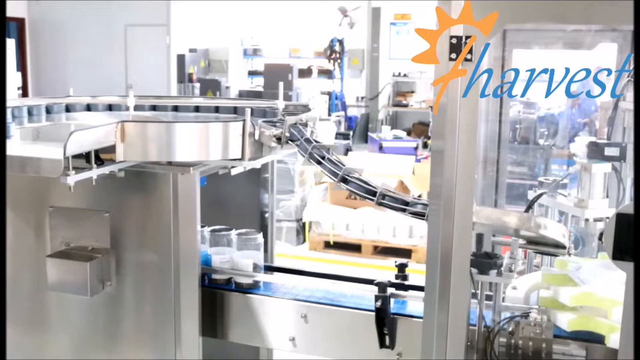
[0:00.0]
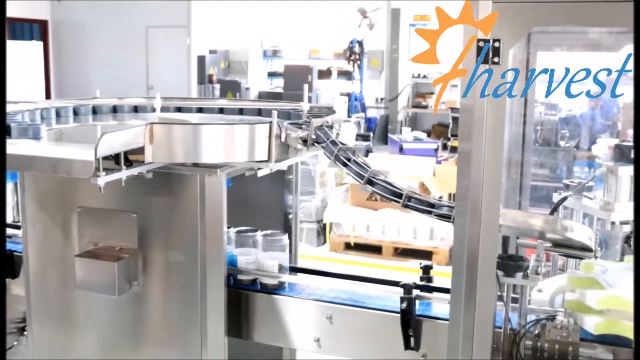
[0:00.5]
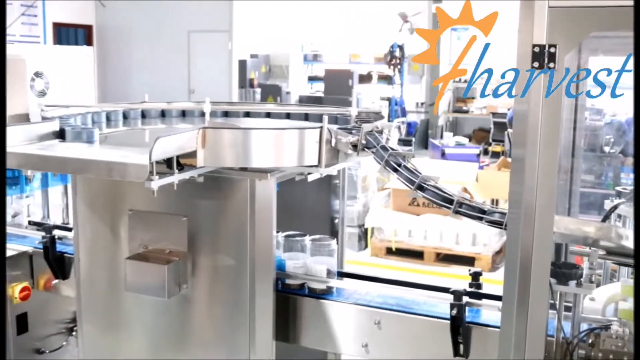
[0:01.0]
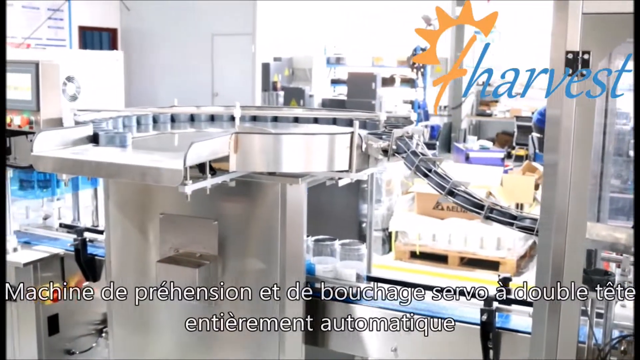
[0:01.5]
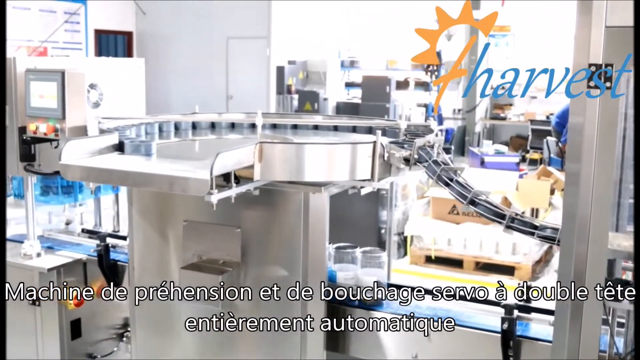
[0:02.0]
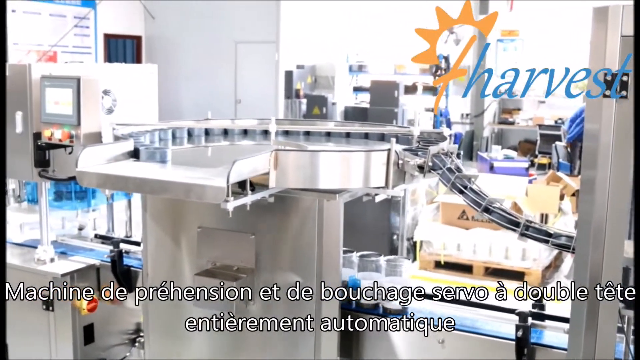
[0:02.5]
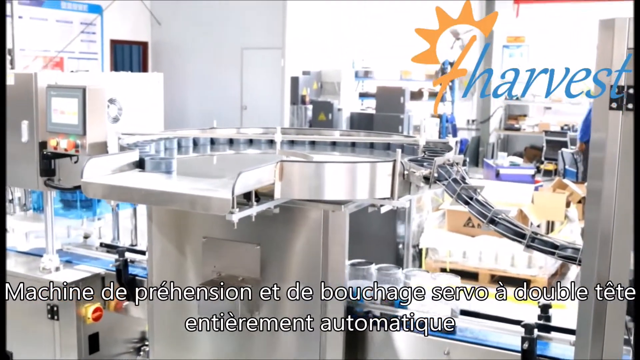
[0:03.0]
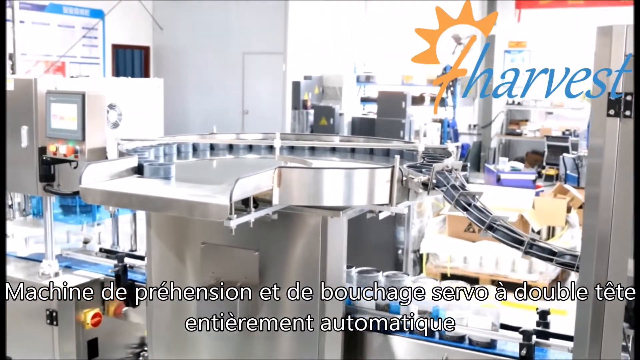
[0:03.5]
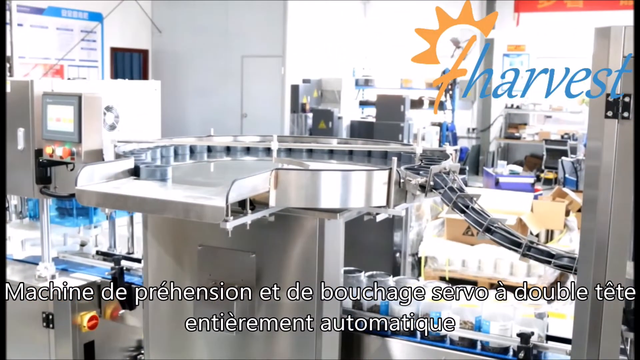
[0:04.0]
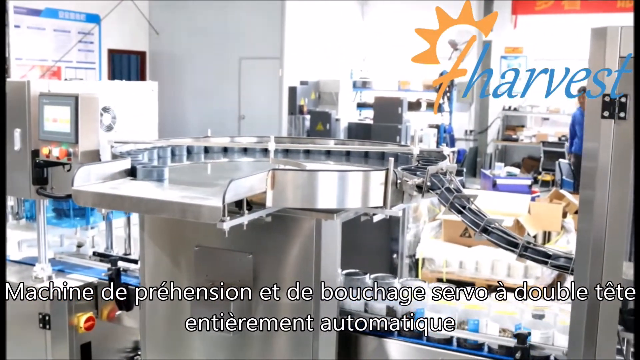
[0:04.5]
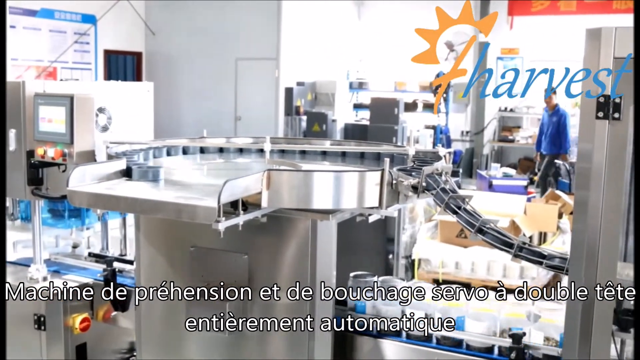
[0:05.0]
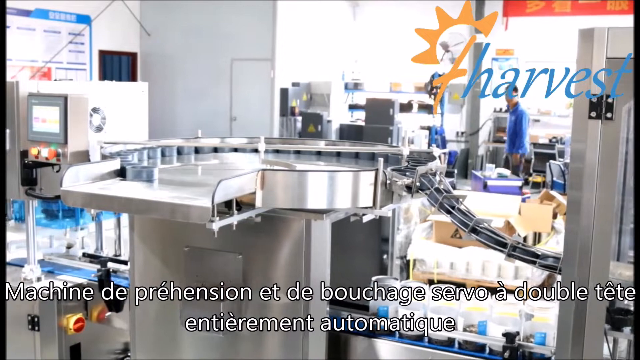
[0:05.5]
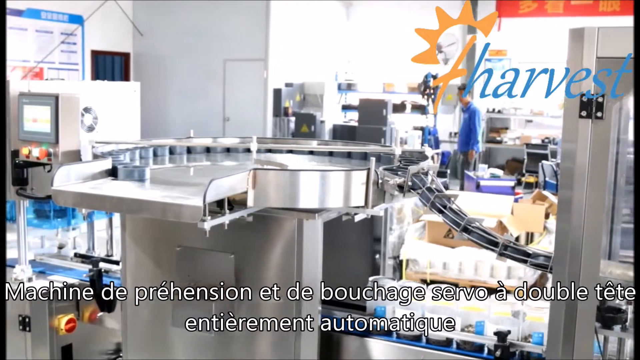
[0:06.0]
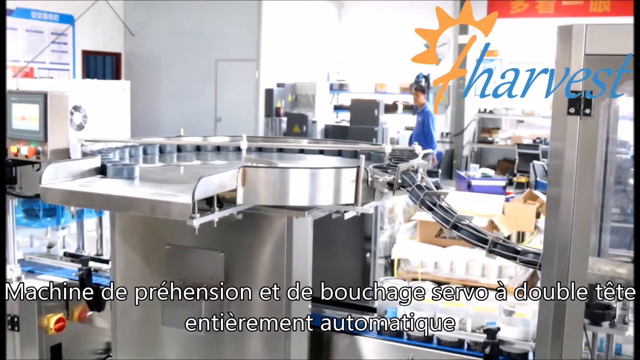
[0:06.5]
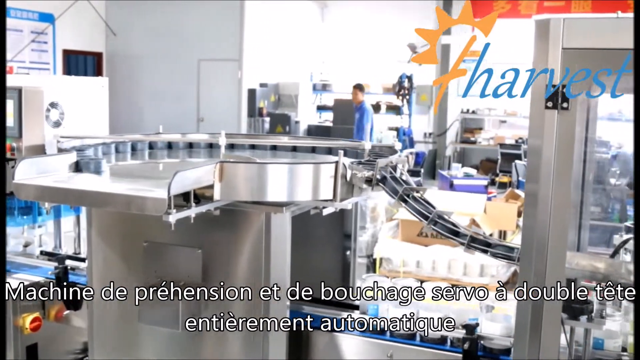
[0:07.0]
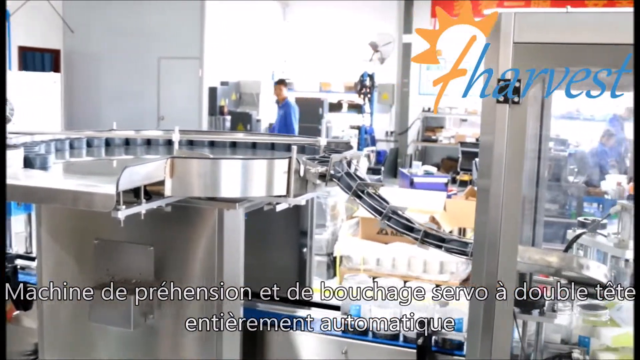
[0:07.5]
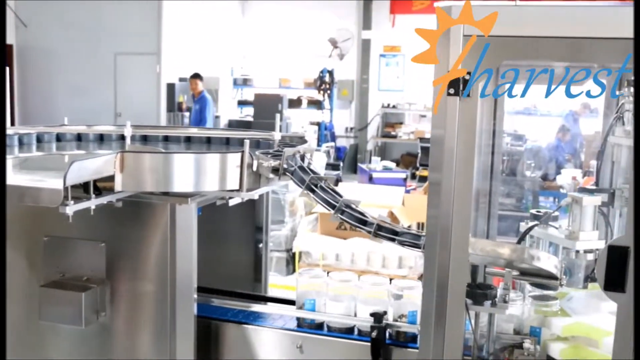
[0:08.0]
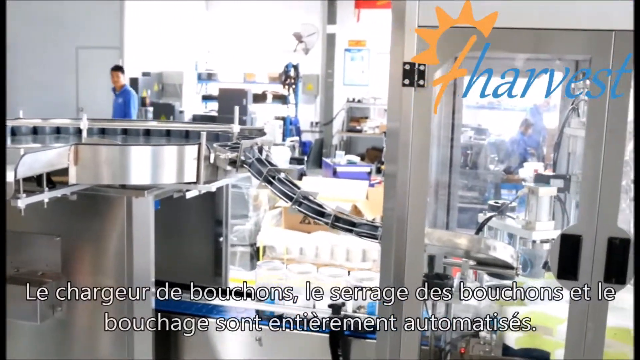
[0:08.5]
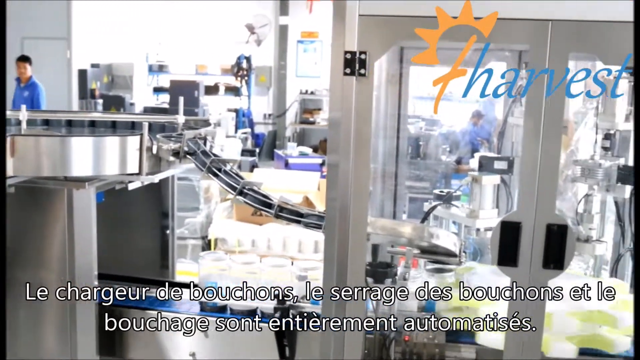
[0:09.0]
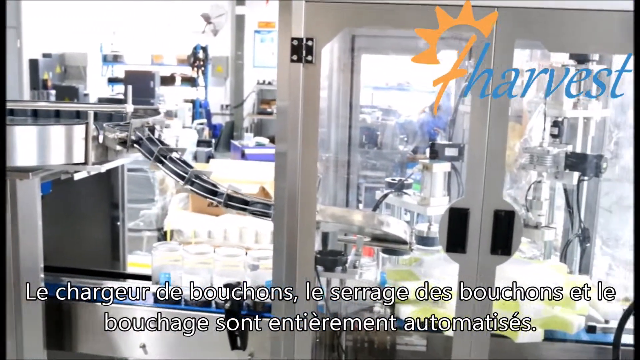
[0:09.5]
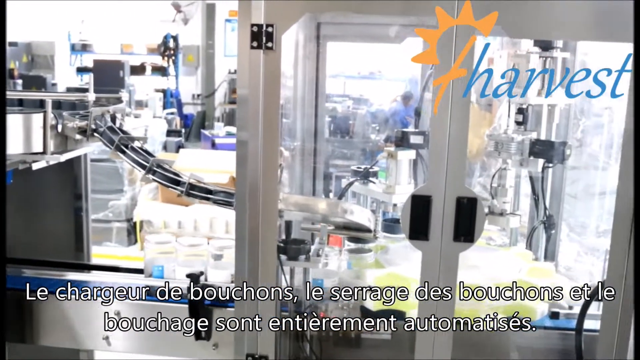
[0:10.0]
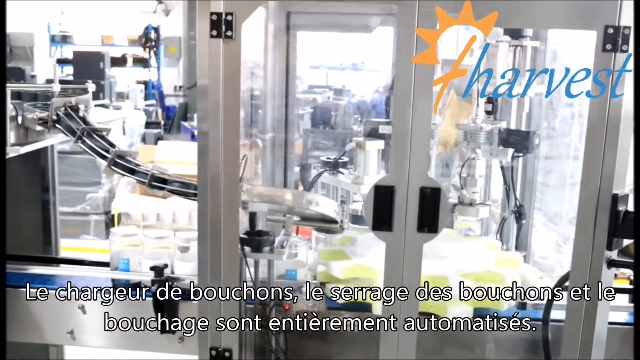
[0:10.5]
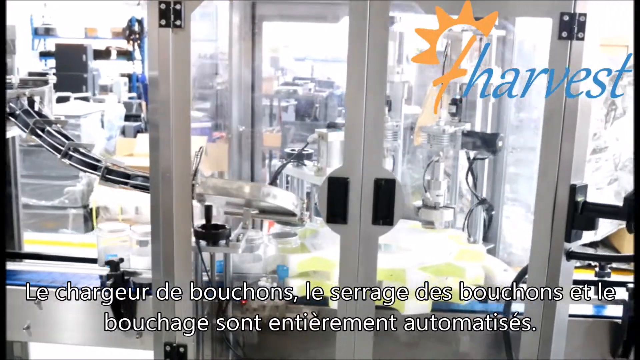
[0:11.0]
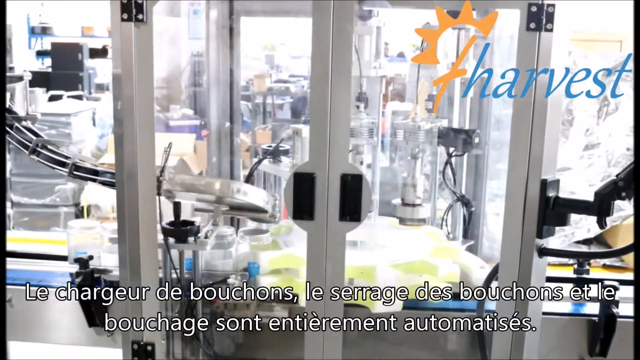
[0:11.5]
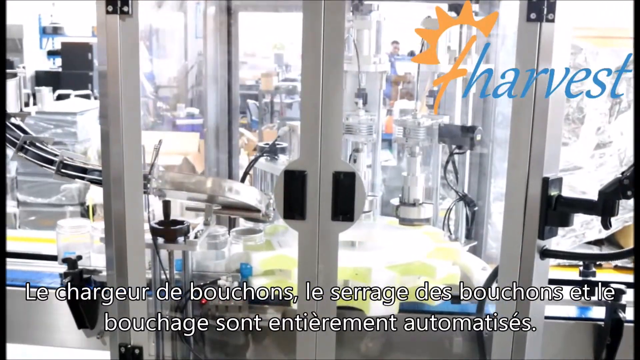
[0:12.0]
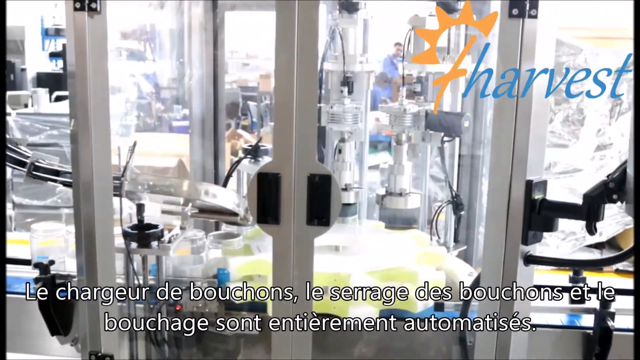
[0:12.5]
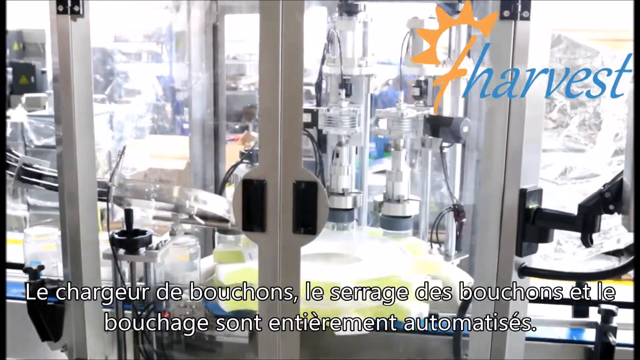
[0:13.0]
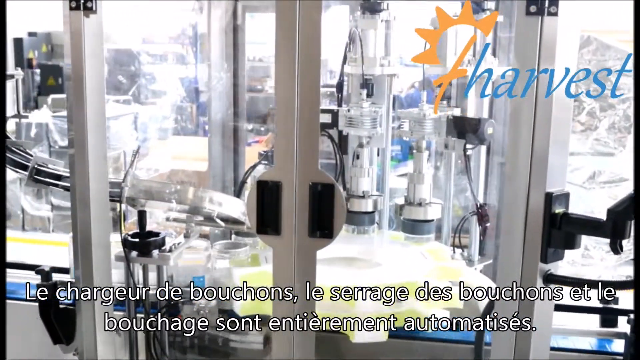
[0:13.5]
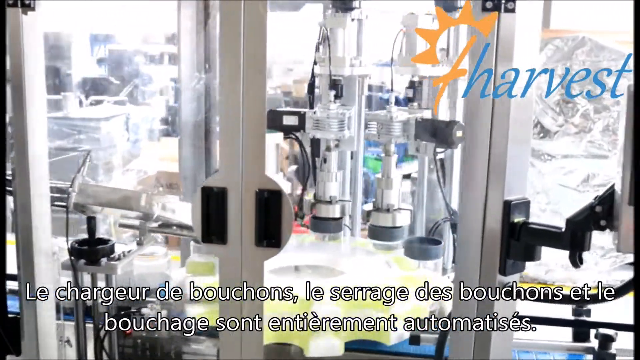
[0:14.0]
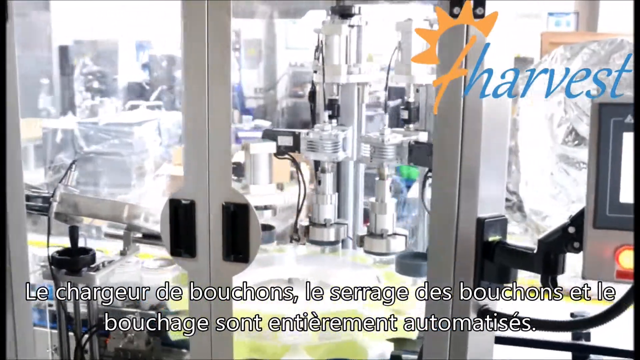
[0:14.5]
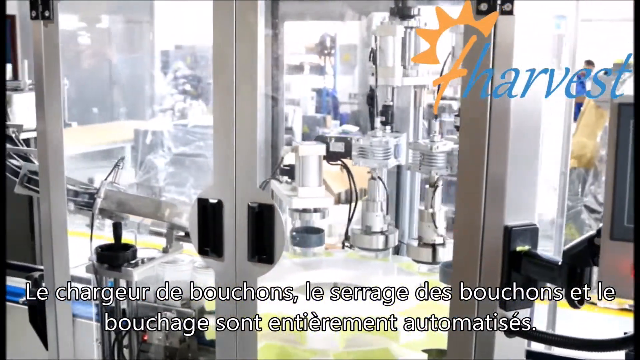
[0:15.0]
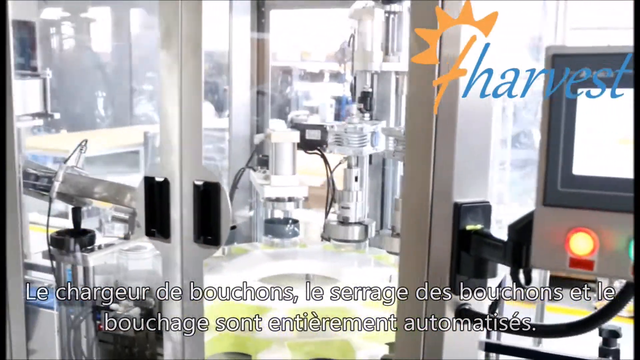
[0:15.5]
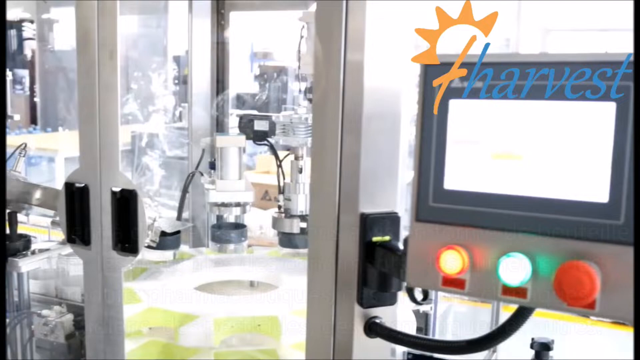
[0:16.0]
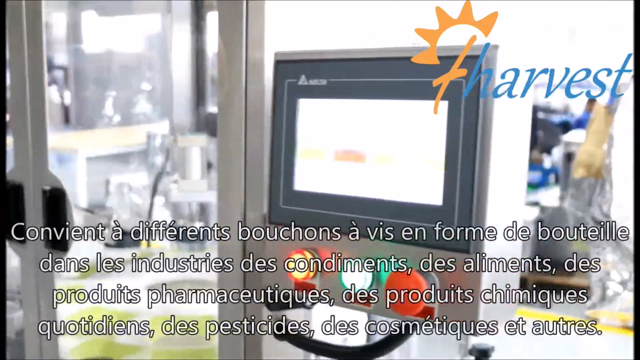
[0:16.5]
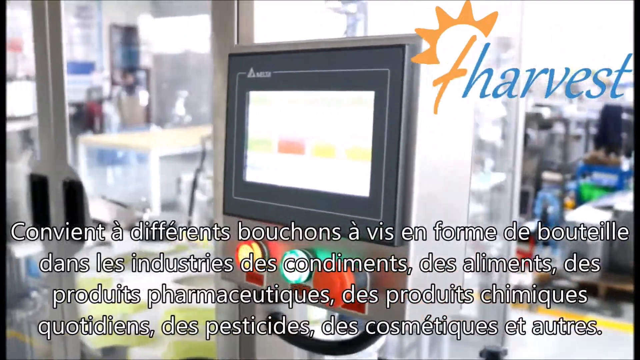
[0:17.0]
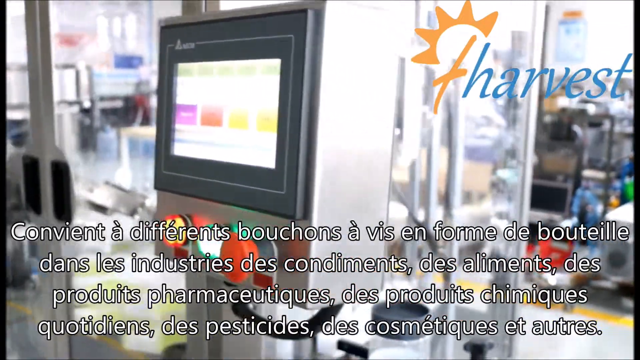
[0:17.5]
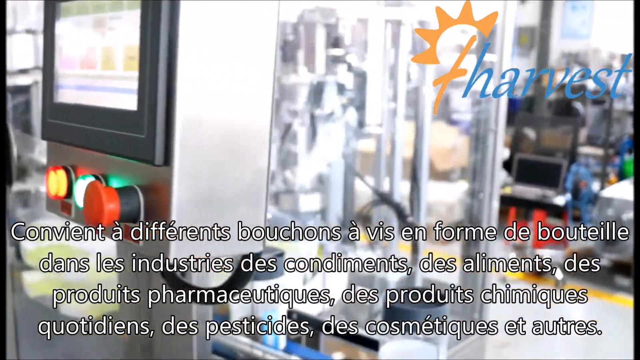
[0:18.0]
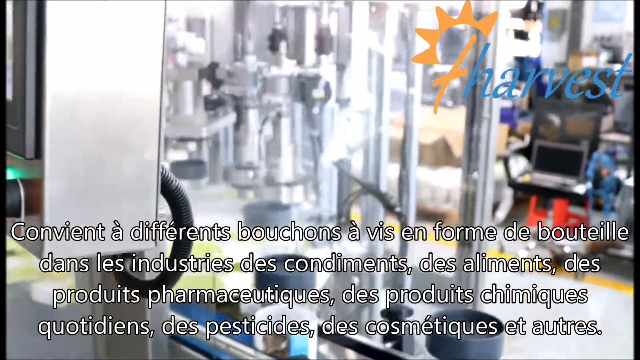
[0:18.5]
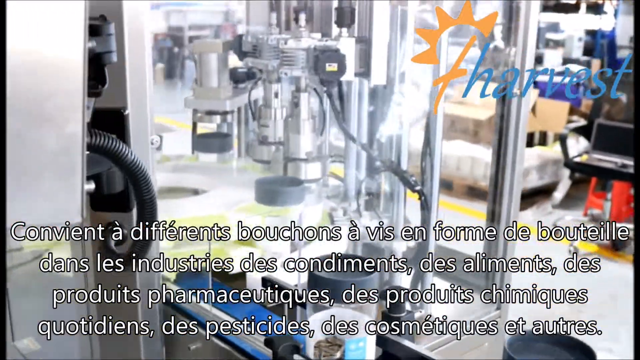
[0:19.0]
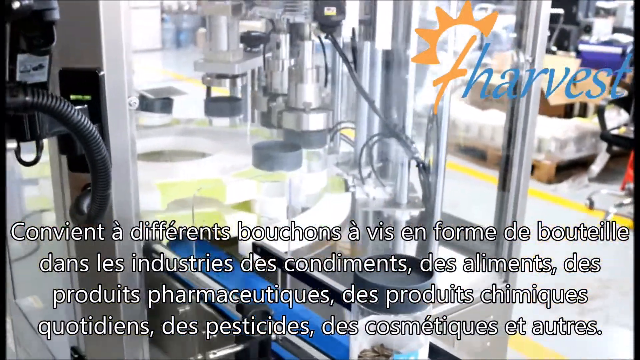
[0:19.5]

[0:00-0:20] The setting is a manufacturing facility. In the top right corner, the word "harvest" appears in blue, italic, lowercase letters beside an orange sun, with a cross or the letter T in front of "harvest". Closed captioning runs along the very bottom of the screen and appears to be in French, with an orange button, a green button and a red button. There are many machines, including conveyor-belt-type equipment, and a product is clearly being manufactured. A person in a blue hooded sweatshirt walks to the left in the background, and another person can be seen on the right; possibly one or two other people are there as well, working. There is all kinds of laboratory and machine equipment, along with bottles and conveyor belts, mostly in silver and white. In the background toward the top there is an orange banner. A machine in the middle goes around in a circle, pressing what look like lids onto different glass bottles or containers.